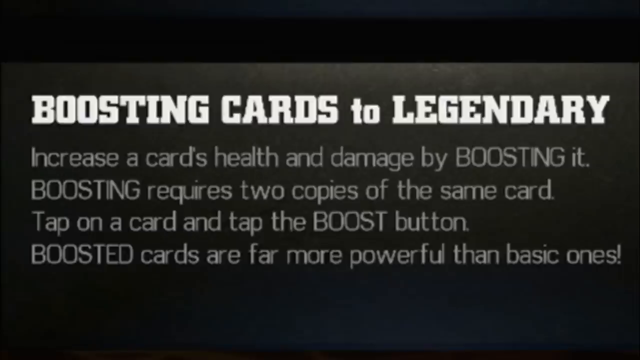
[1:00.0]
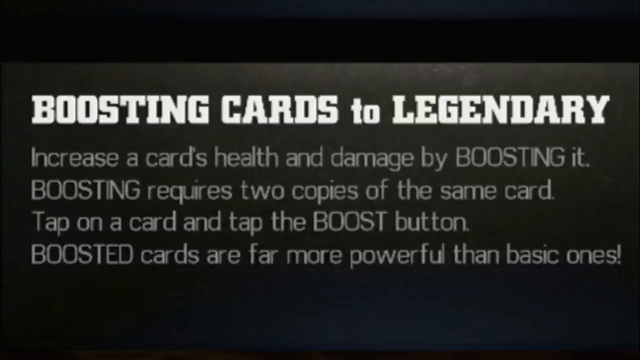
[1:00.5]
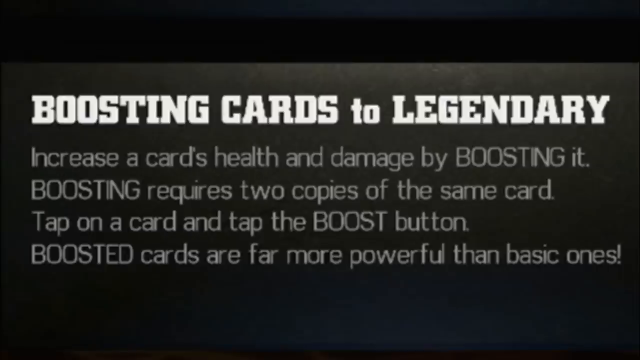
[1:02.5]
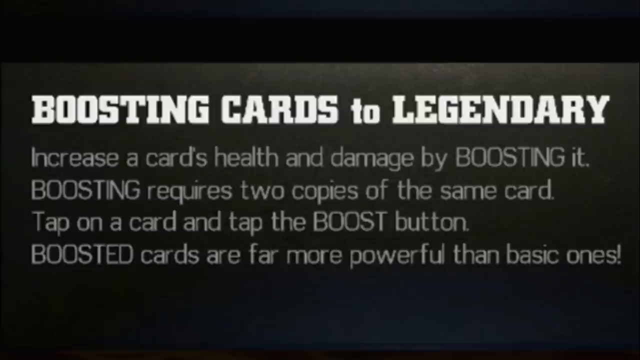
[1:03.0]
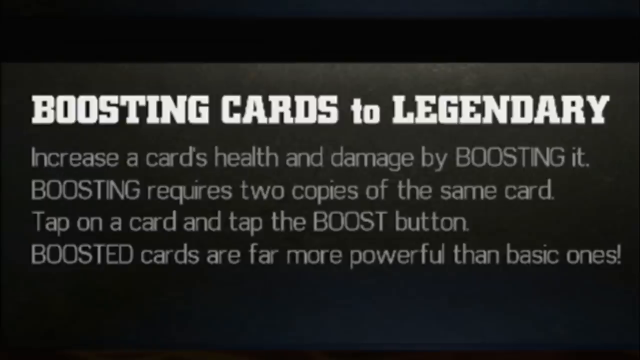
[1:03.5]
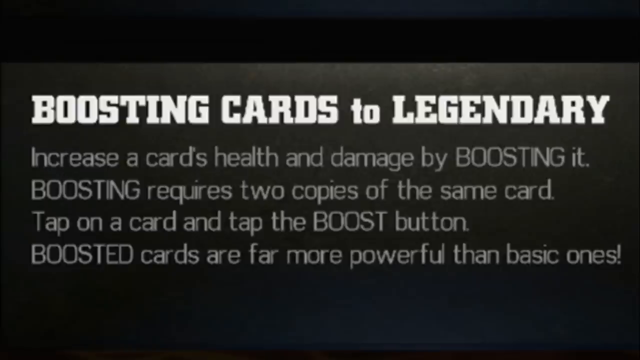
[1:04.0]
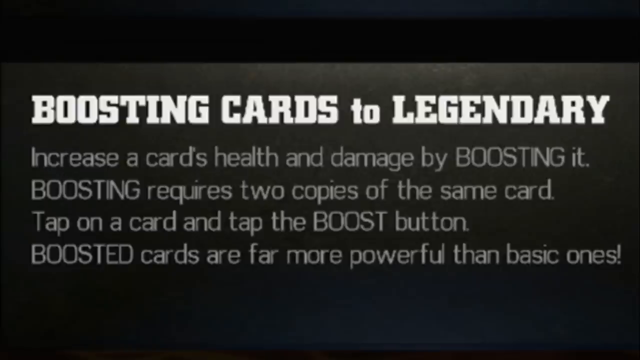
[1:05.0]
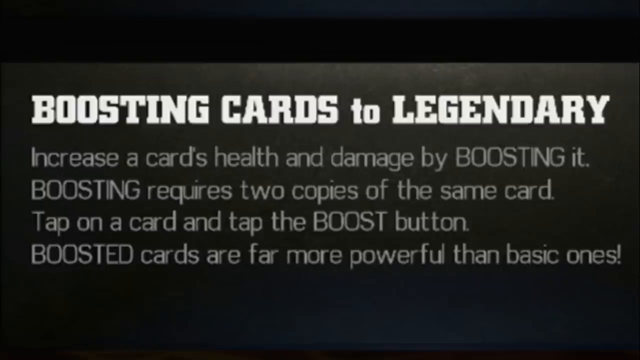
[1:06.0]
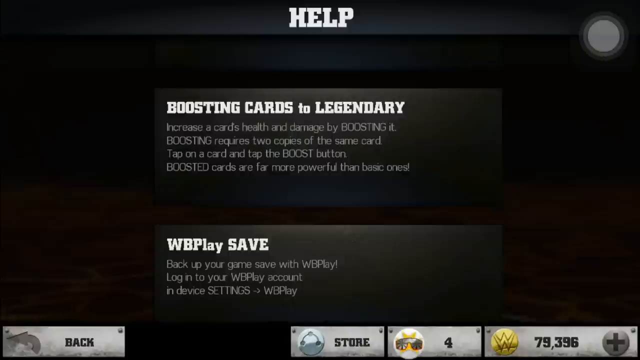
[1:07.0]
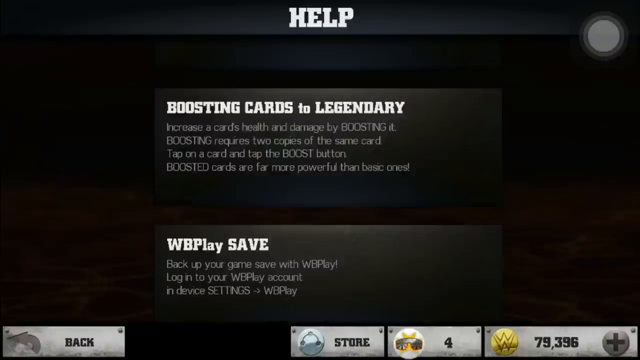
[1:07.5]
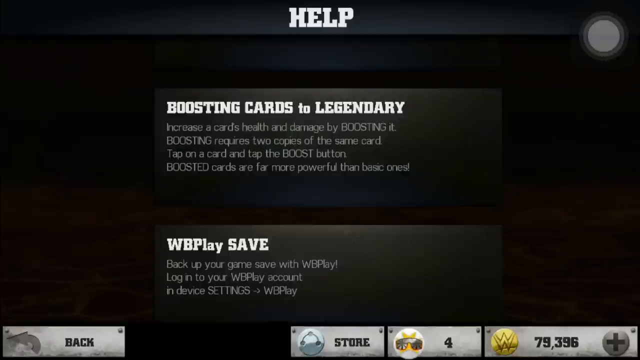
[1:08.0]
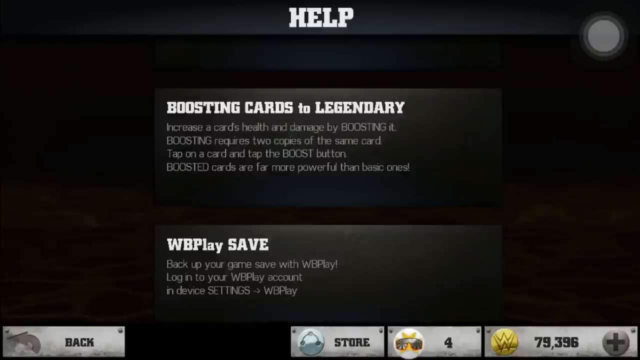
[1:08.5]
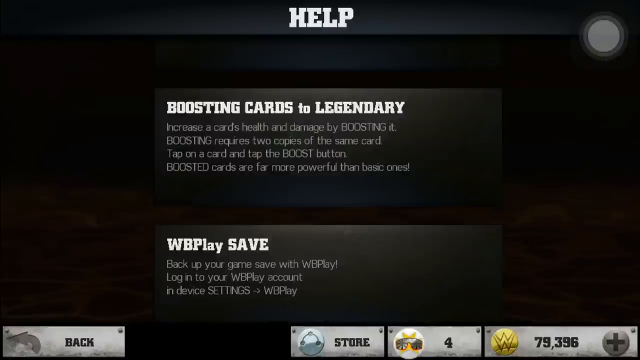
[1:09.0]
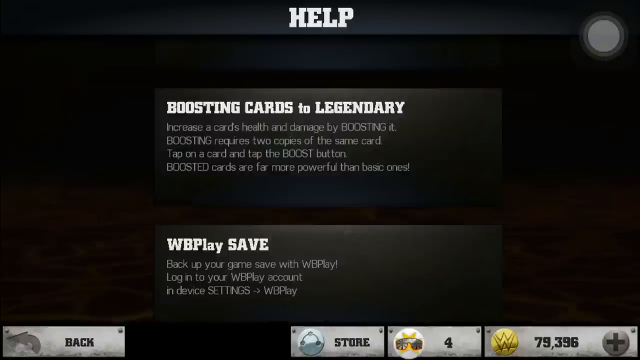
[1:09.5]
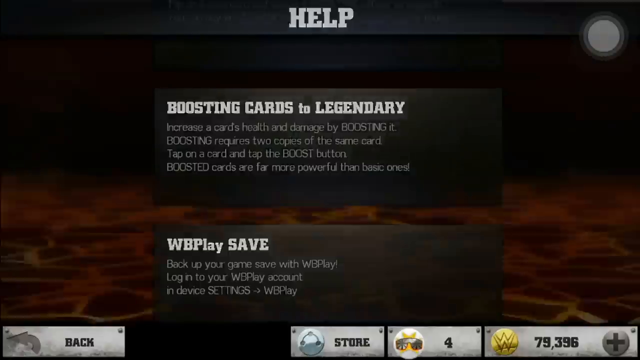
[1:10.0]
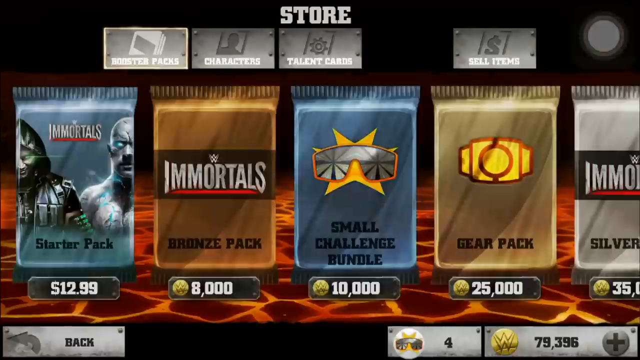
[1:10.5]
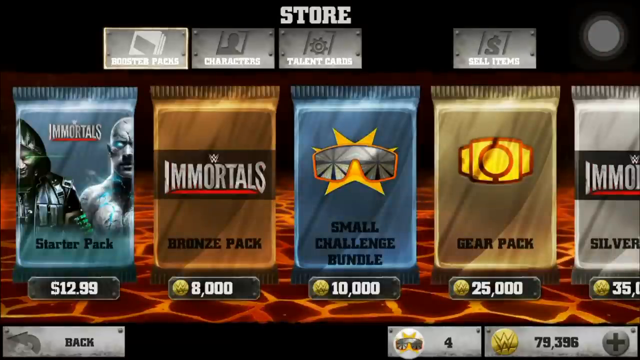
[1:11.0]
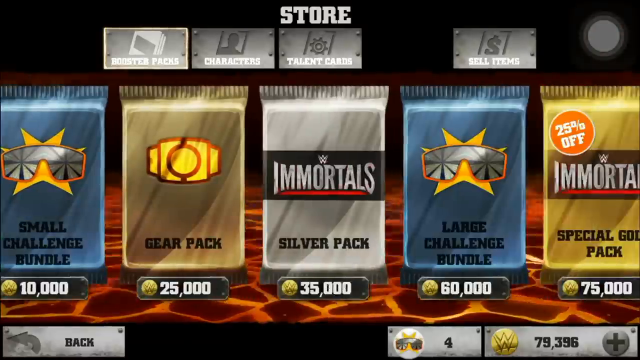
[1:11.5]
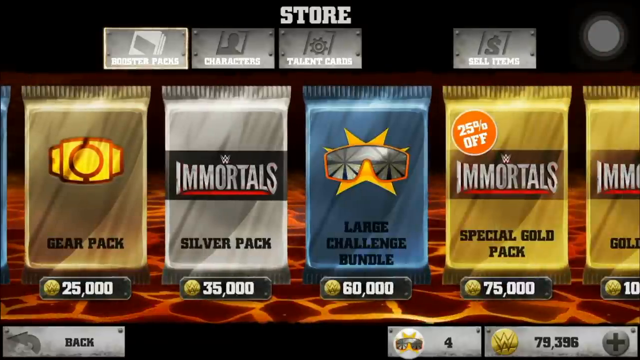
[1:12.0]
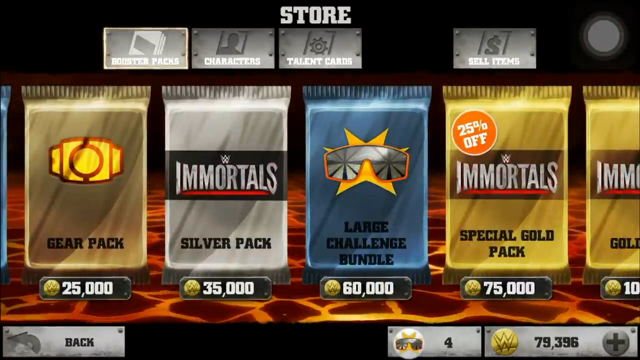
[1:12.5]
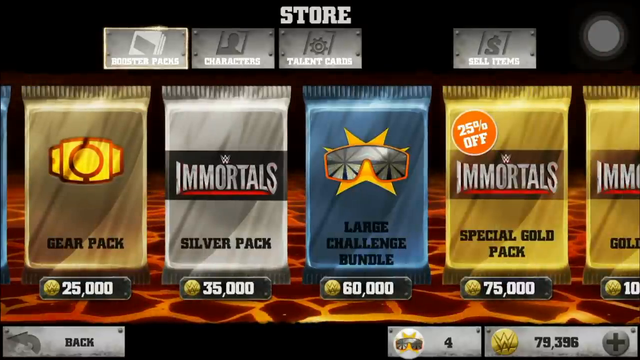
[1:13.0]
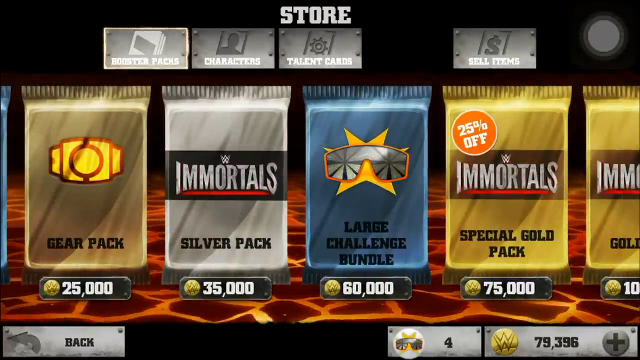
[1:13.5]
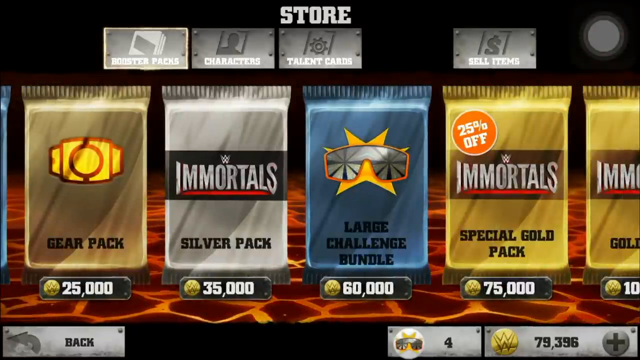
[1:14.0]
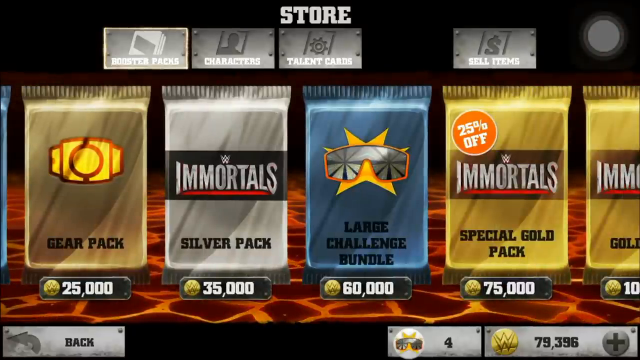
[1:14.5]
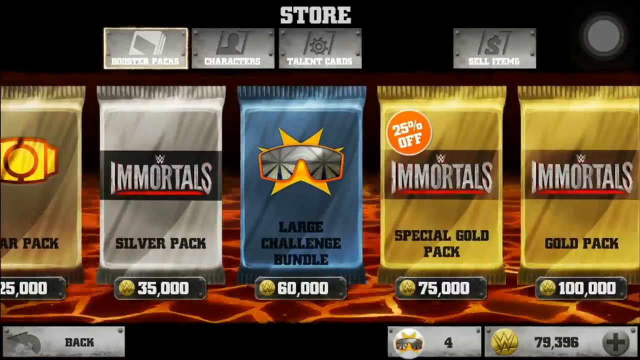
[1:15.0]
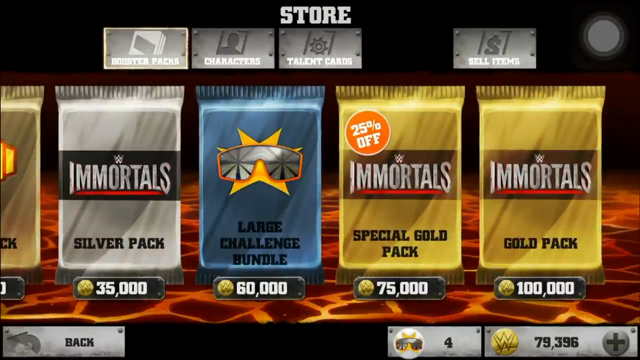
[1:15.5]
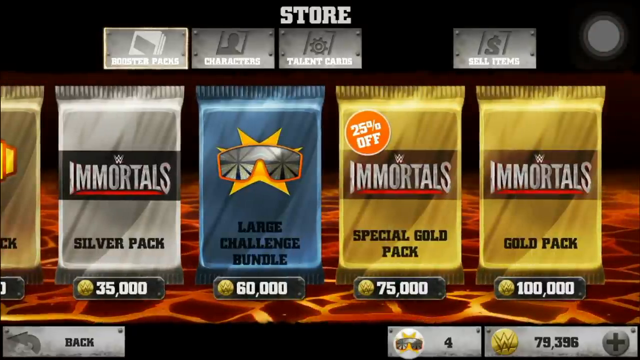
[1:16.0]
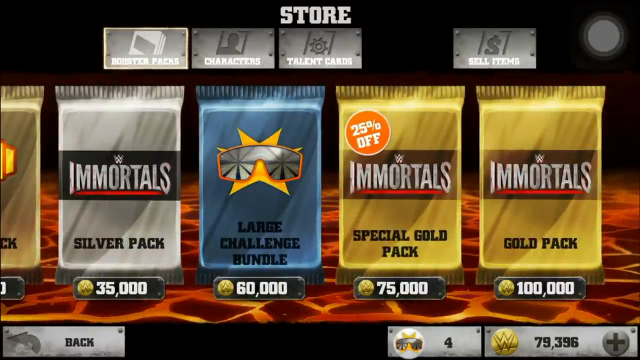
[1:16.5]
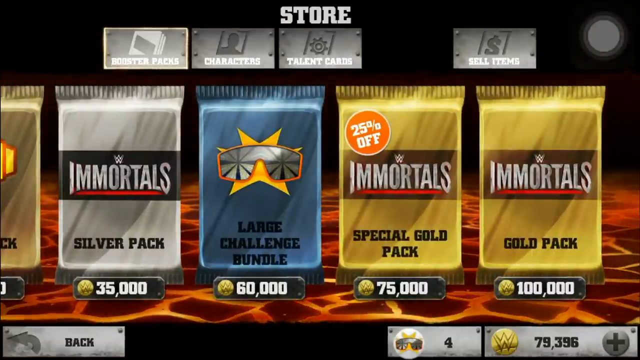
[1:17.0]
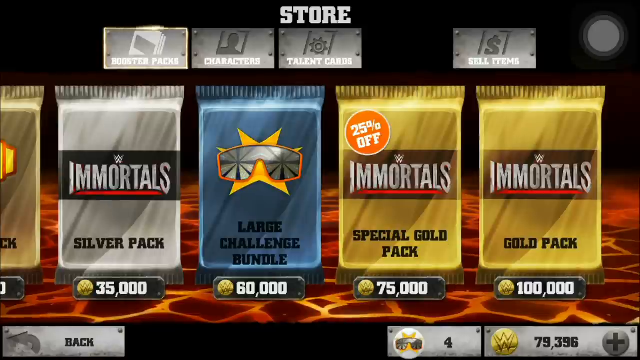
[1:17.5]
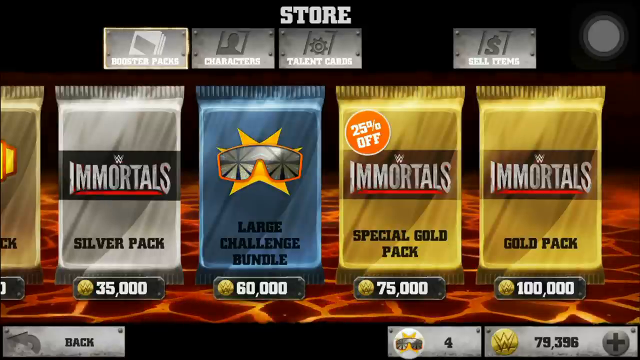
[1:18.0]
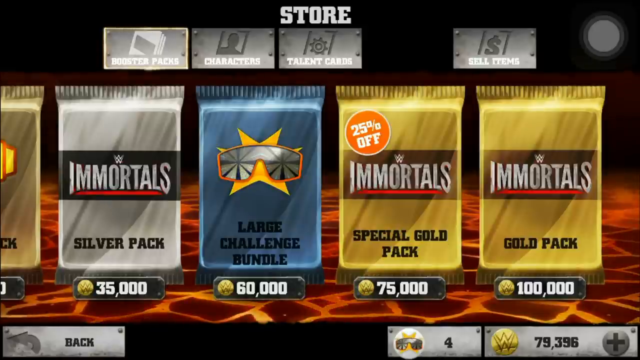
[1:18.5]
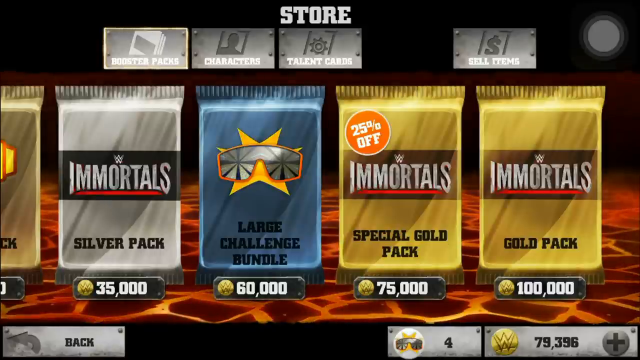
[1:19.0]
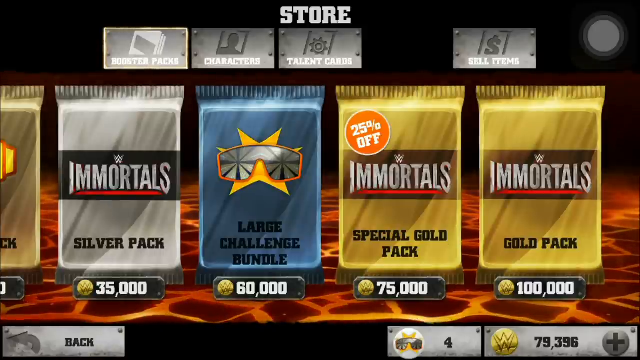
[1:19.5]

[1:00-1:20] A screen about boosting cards to legendary reads "Increase the card's health and damage by boosting it. Boosting requires two copies of the same card. Tap on a card and tap the boost button. Boosted cards are far more powerful than basic ones." The person goes back to the help screen, where text mentions backing up the game with WB play. They then look at the store, which offers packs such as a gear pack, a silver pack and a special gold pack, priced in dollar, star or coin amounts.